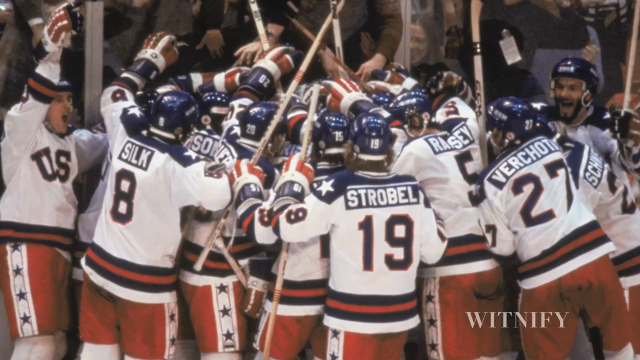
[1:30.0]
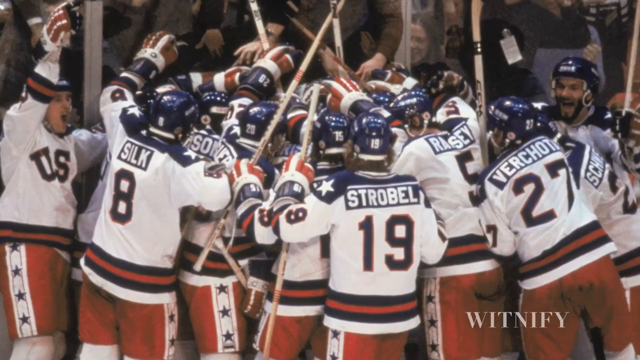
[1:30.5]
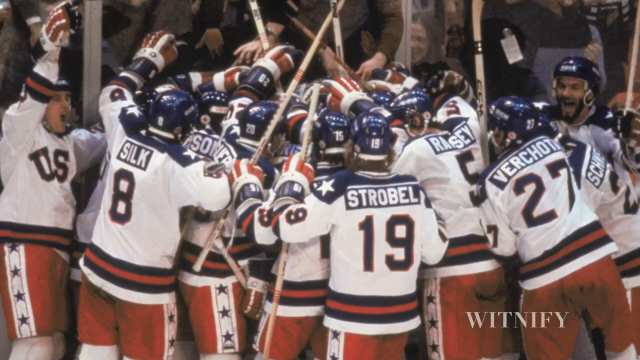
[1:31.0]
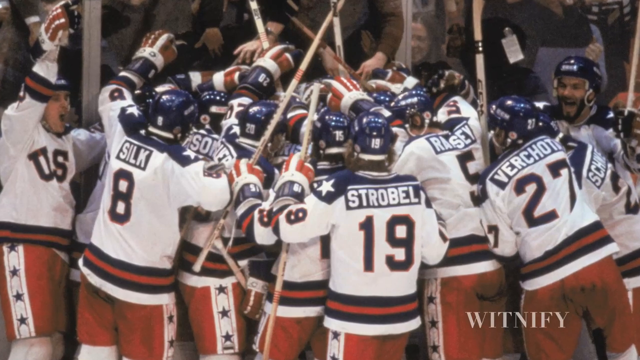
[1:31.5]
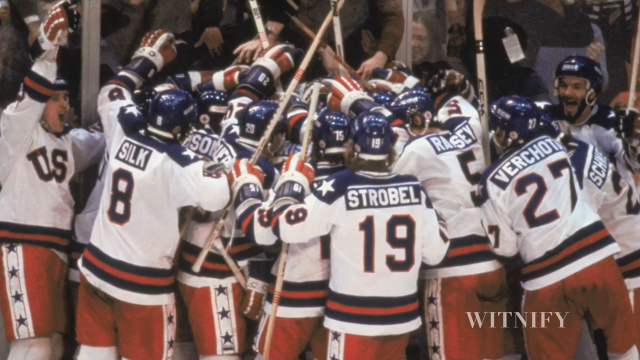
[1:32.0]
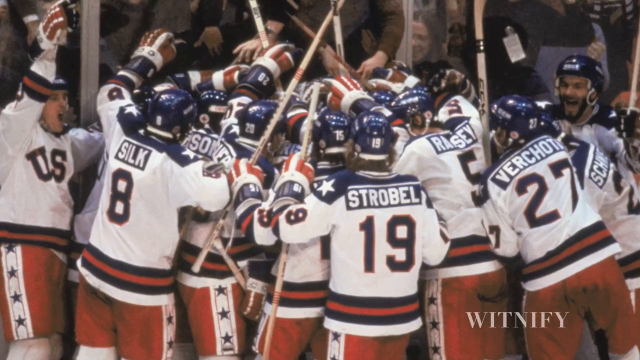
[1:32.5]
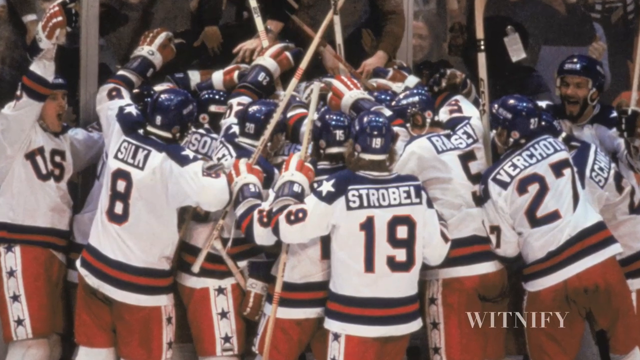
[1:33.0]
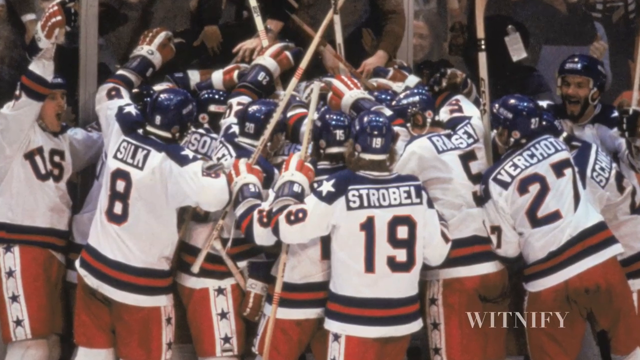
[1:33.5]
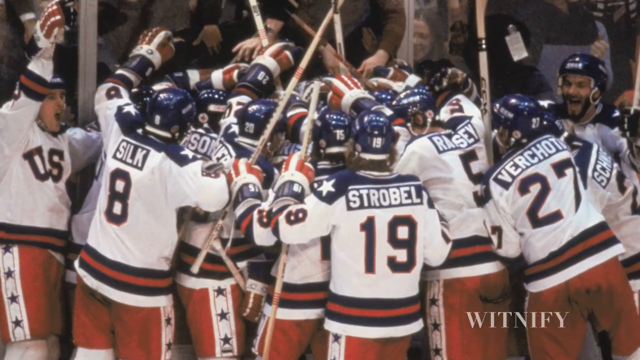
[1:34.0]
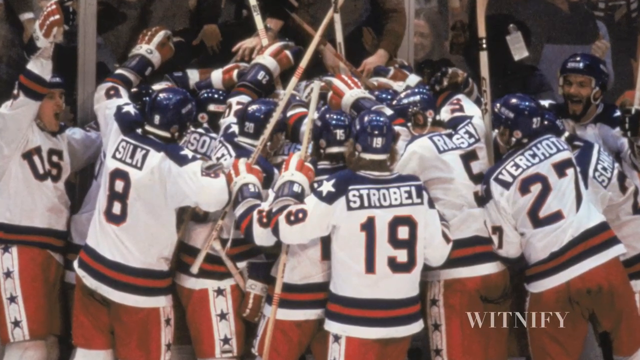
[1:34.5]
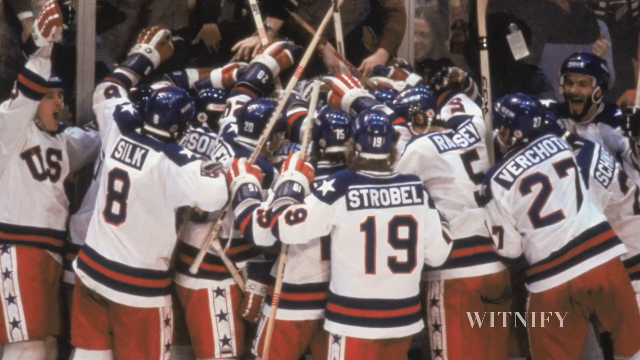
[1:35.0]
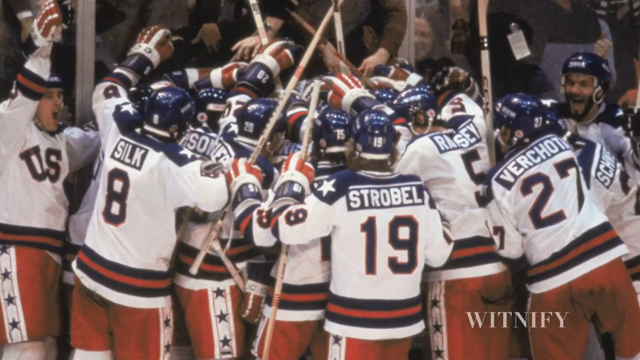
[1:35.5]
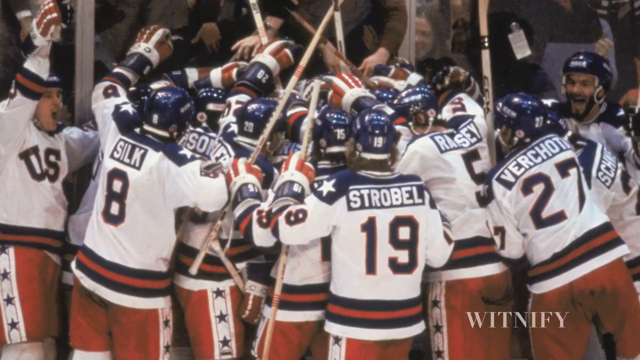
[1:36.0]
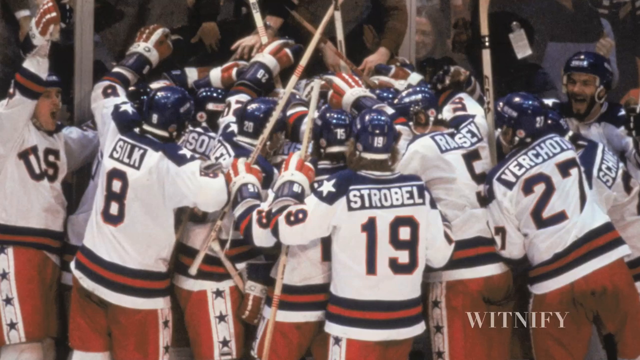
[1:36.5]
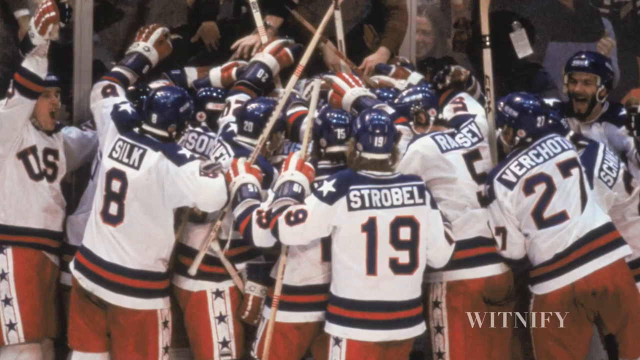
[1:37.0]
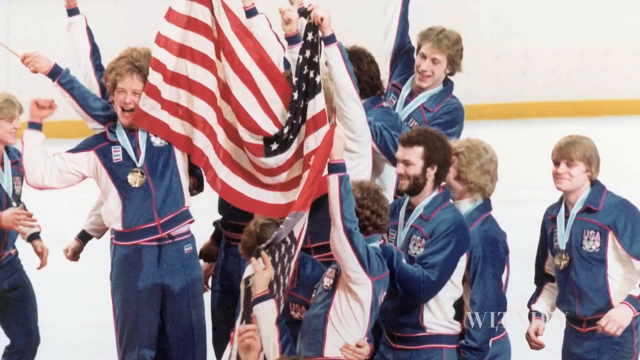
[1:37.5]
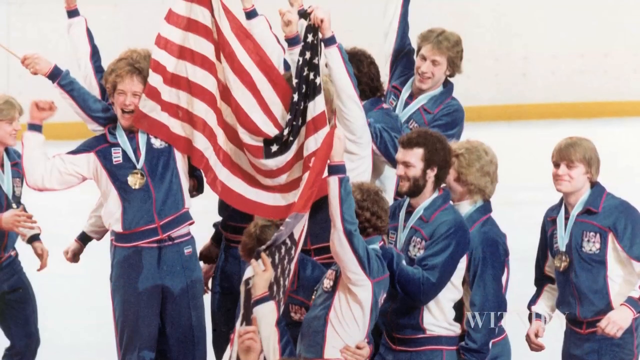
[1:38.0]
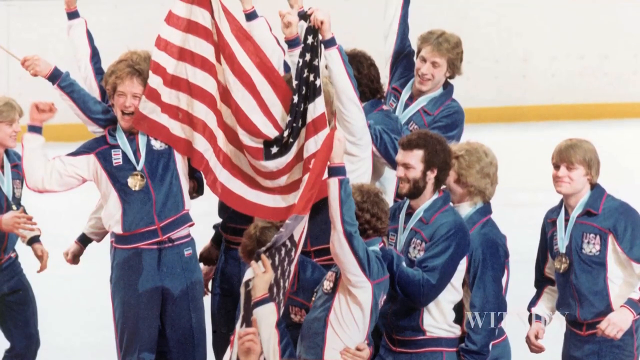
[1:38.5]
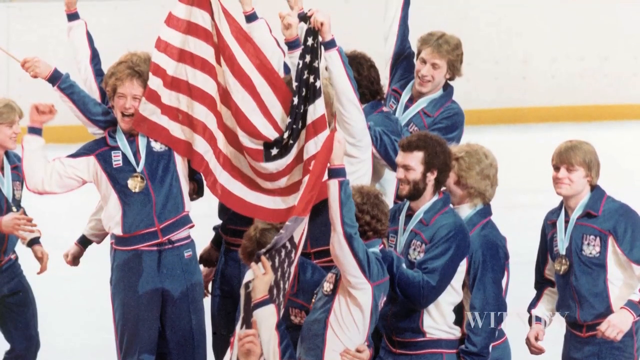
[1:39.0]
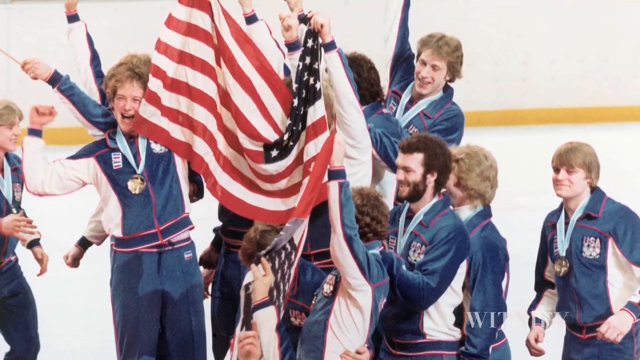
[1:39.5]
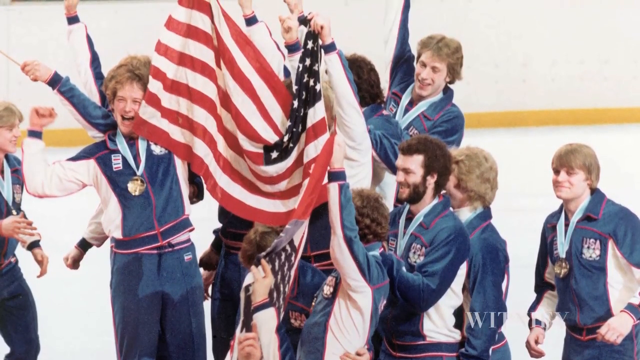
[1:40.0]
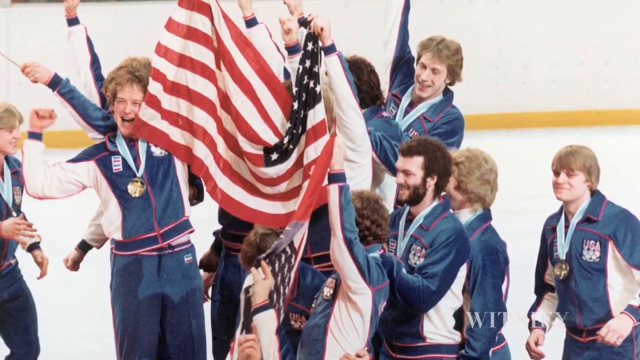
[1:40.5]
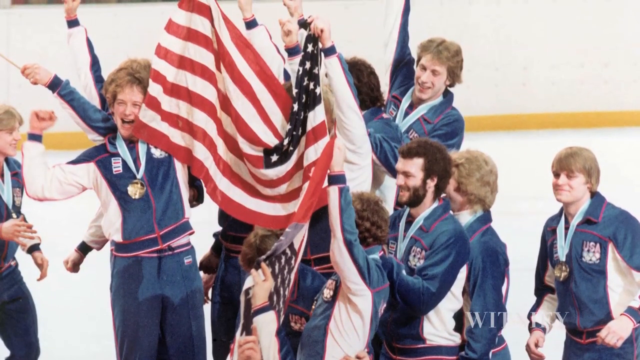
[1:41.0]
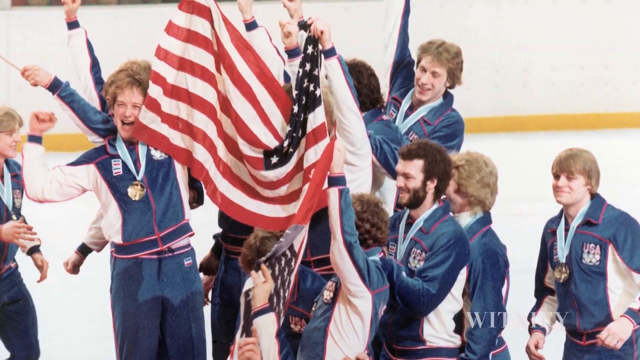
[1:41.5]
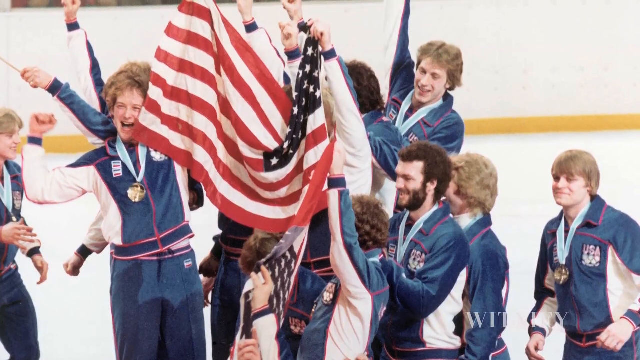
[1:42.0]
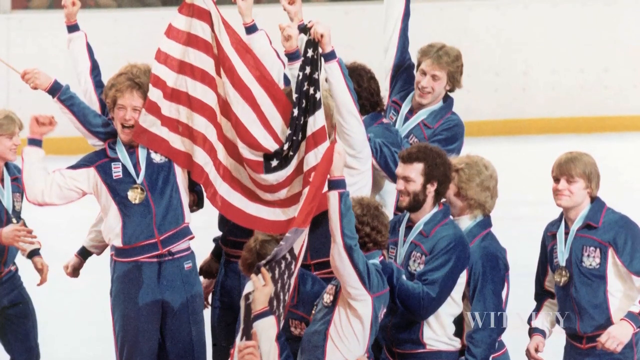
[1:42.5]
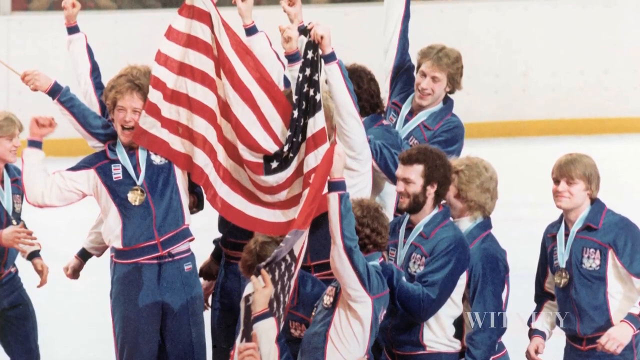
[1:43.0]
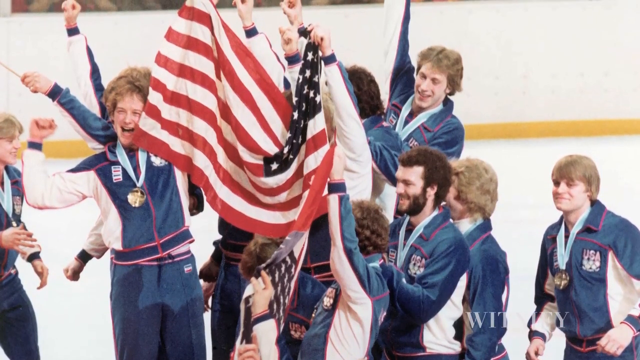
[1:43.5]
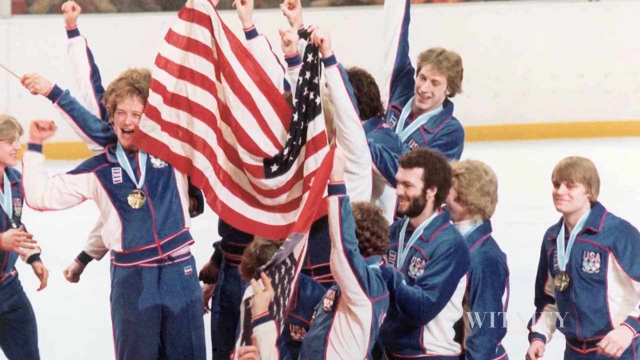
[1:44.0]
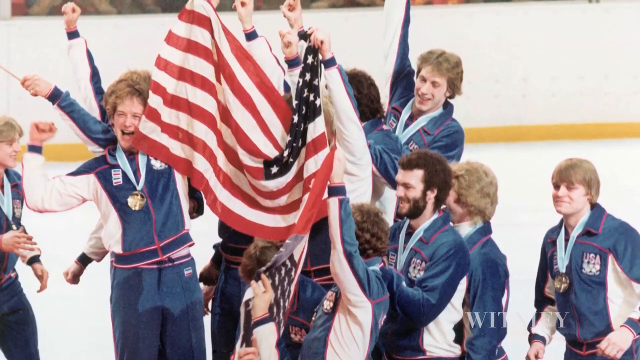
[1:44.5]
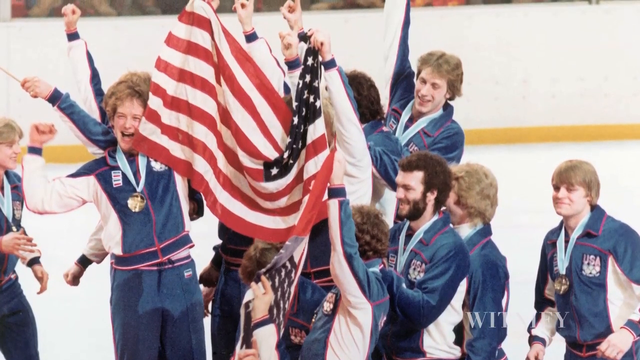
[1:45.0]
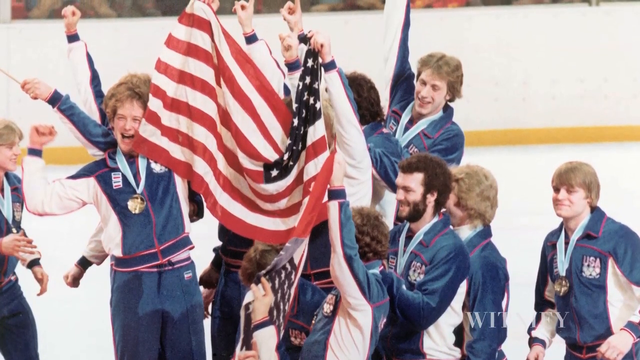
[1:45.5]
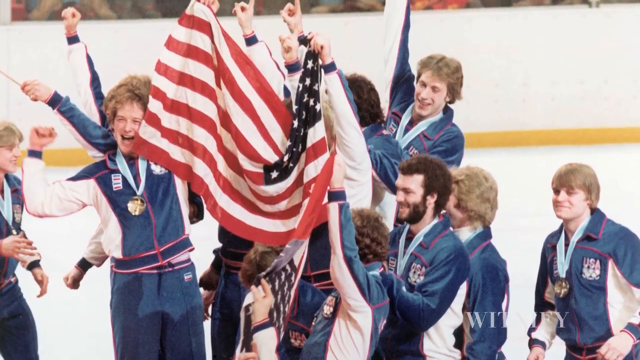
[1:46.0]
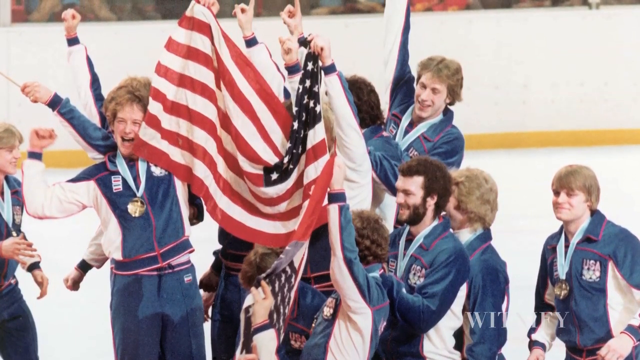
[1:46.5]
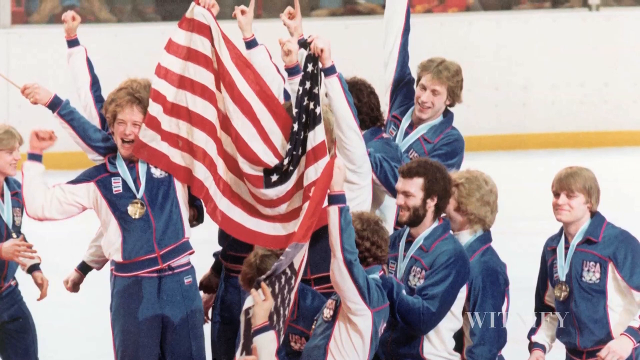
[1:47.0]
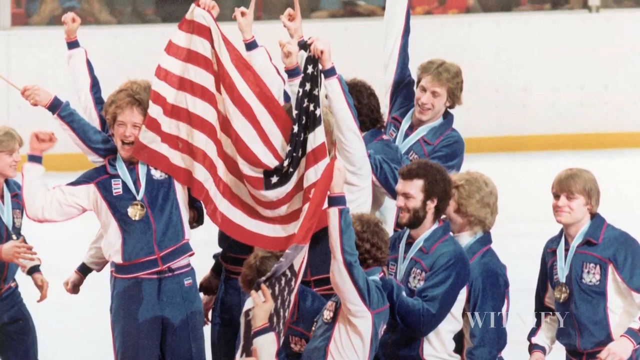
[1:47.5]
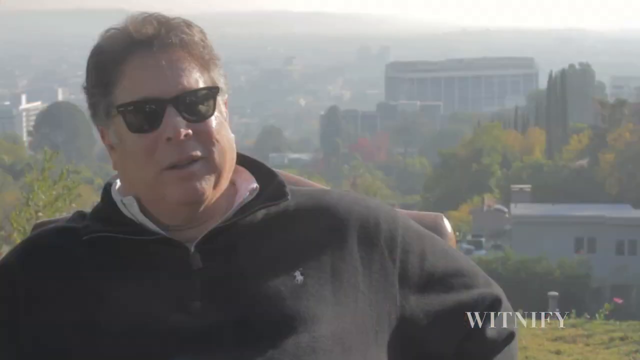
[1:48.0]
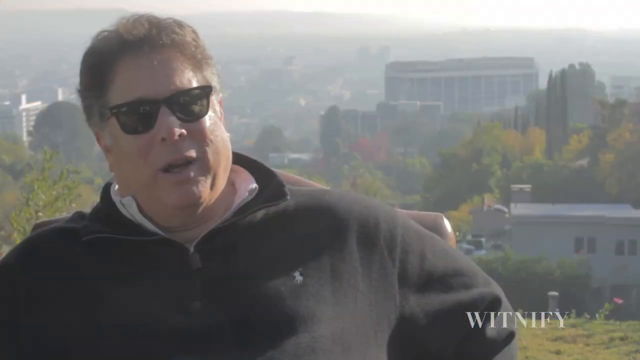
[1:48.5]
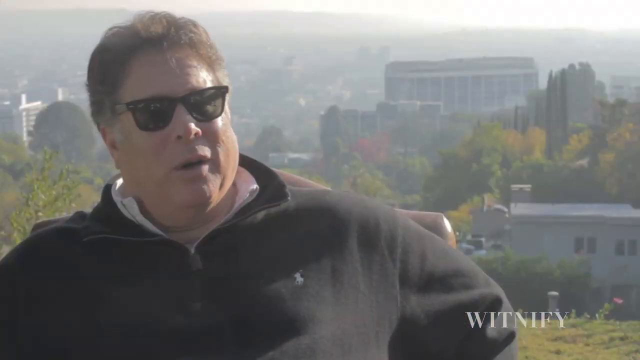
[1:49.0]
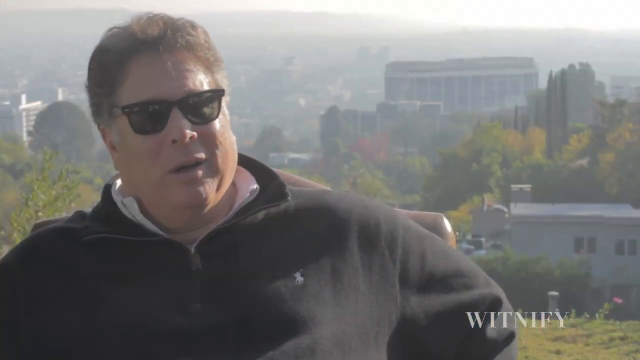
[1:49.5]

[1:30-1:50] The photo shows the Team USA hockey team celebrating, with their backs turned to the camera except for two players, who are cheering with happy faces. In the background a crowd is behind glass, and one woman's face is visible; she appears happy as well. Many of the players have sticks raised in the air and their hands on the backs of teammates. Next, a photo shows Team USA hockey in matching blue jumpsuits. Many have medals around their necks, which appear to be gold medals, and they are holding up an American flag. All the players appear very happy, with fists in the air, smiles and cheering. David Israel is then speaking into the camera once again.